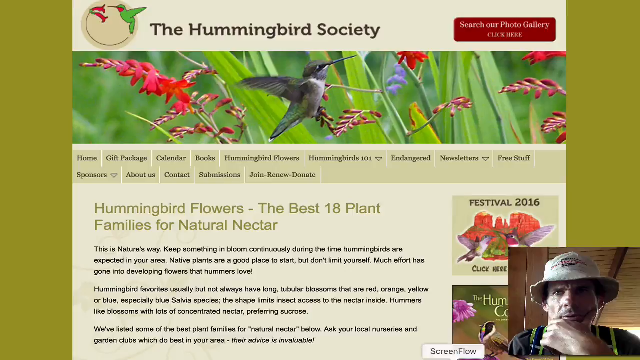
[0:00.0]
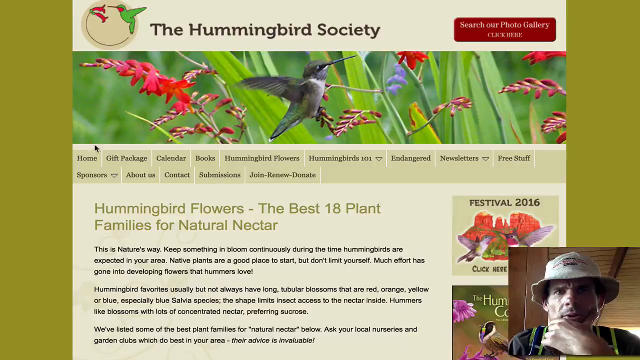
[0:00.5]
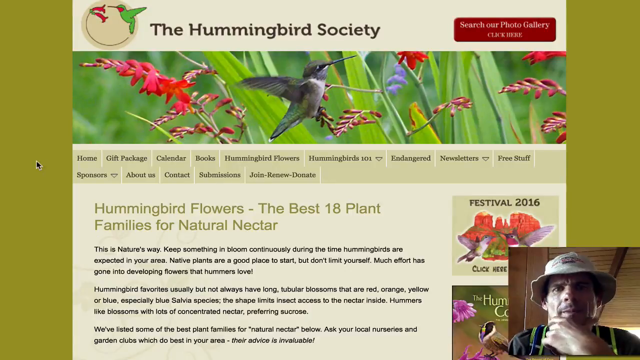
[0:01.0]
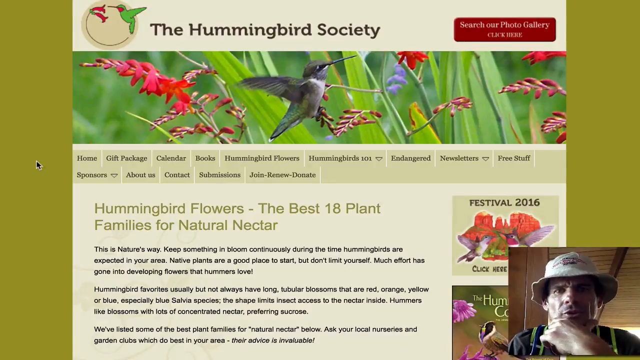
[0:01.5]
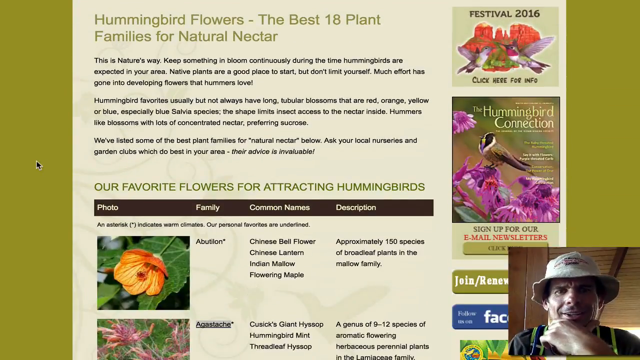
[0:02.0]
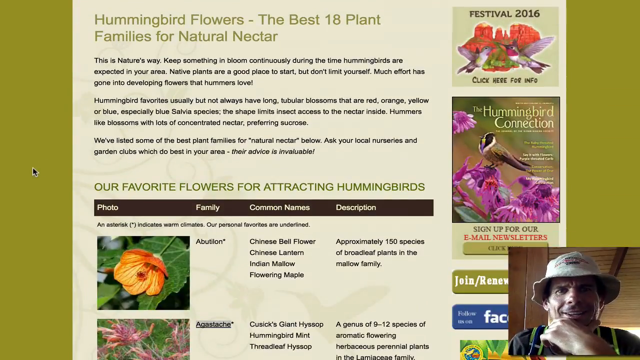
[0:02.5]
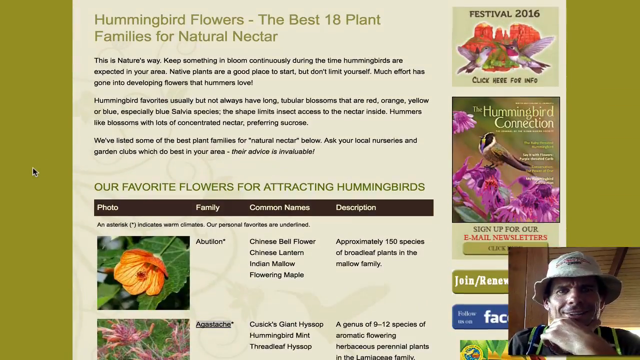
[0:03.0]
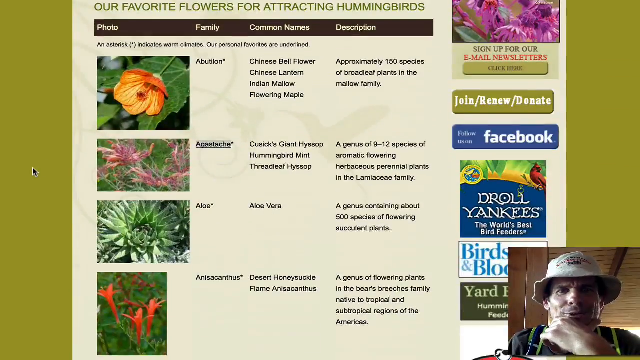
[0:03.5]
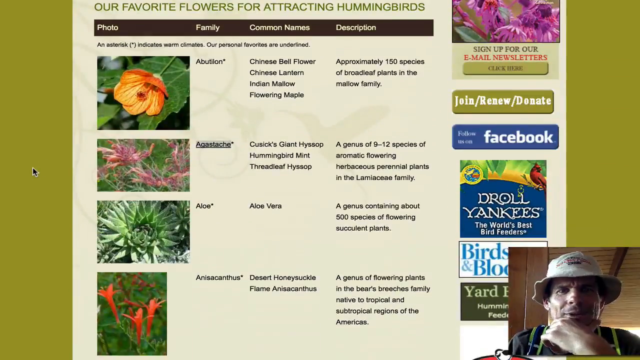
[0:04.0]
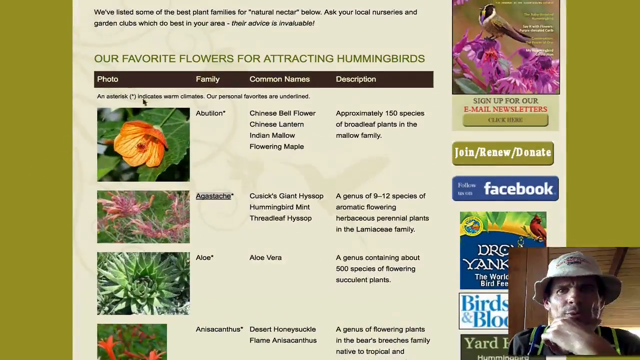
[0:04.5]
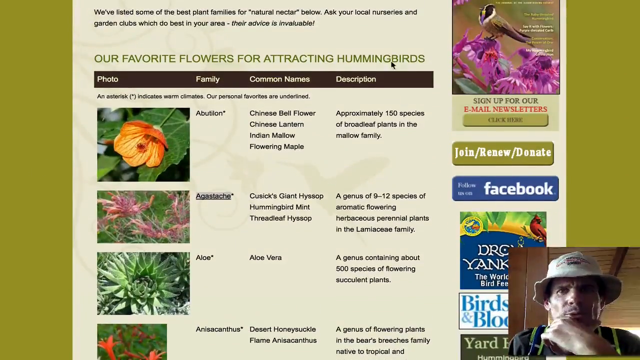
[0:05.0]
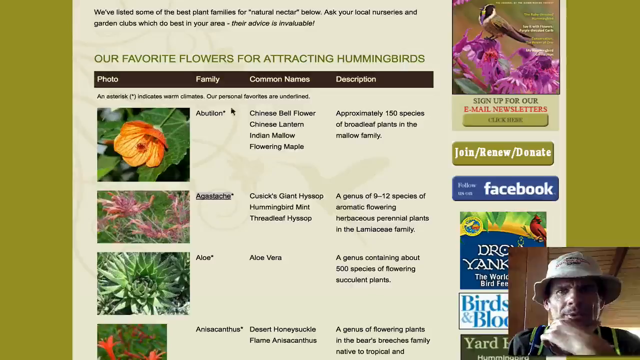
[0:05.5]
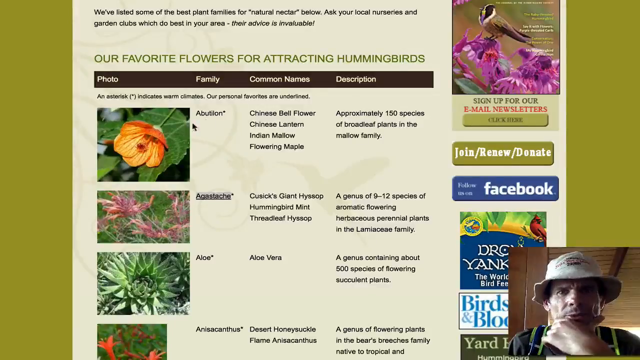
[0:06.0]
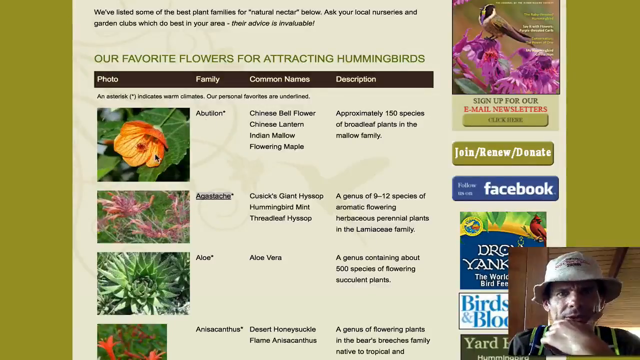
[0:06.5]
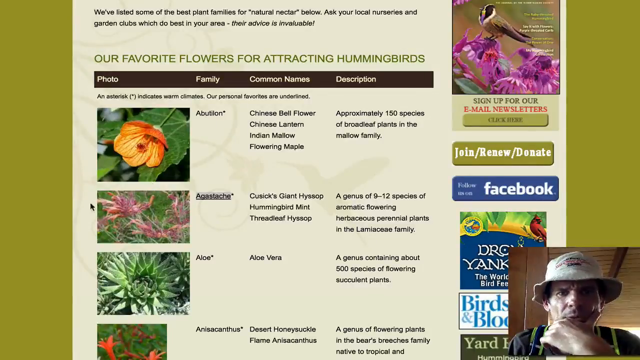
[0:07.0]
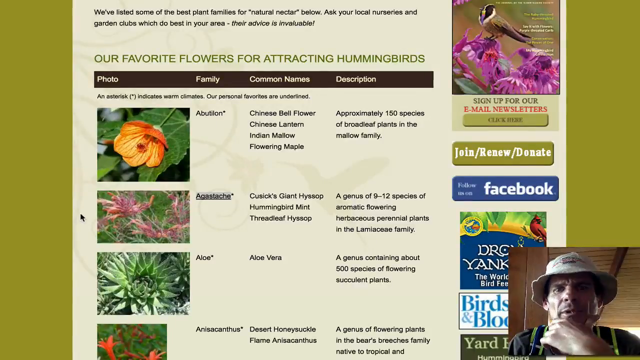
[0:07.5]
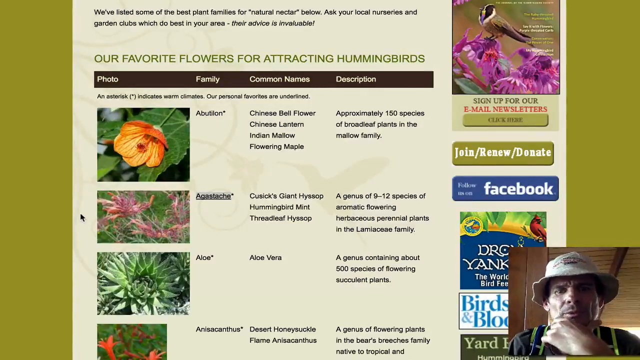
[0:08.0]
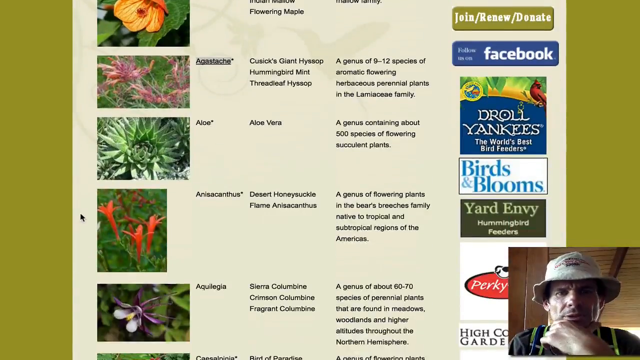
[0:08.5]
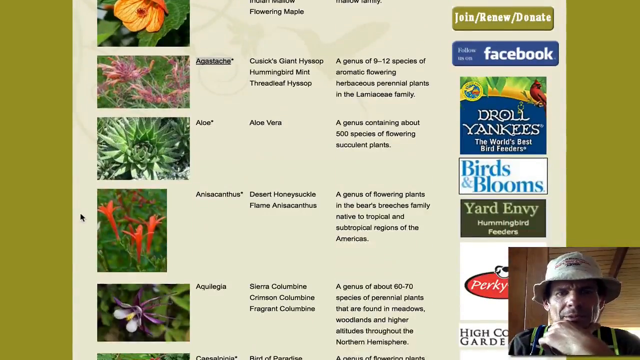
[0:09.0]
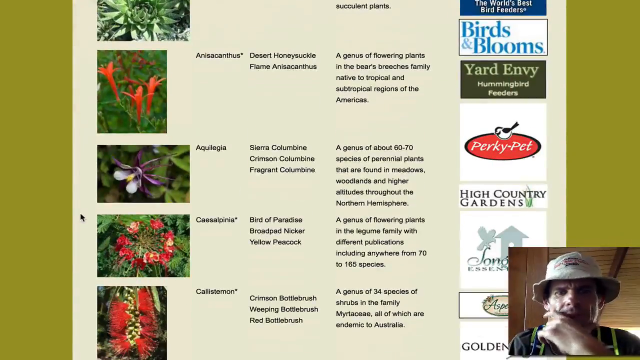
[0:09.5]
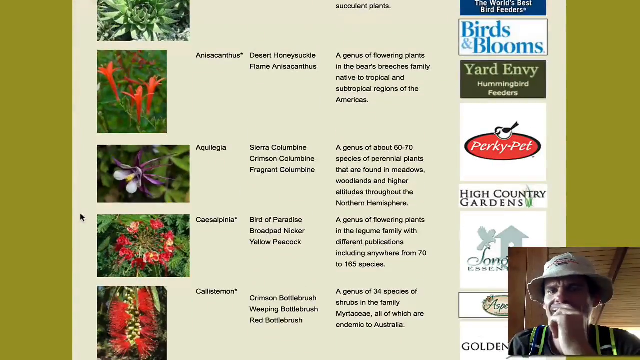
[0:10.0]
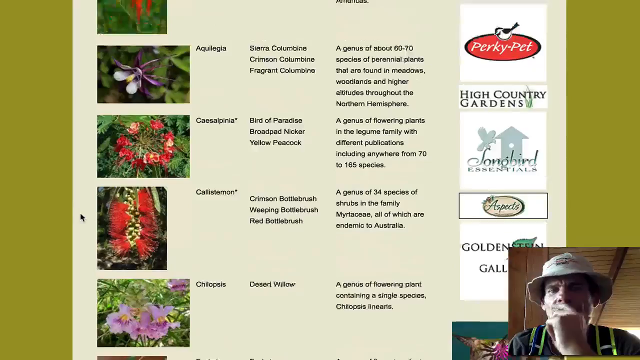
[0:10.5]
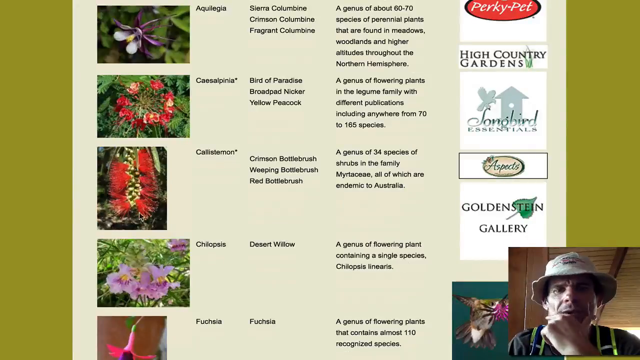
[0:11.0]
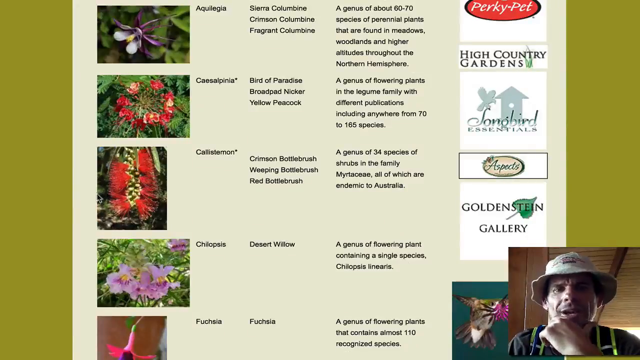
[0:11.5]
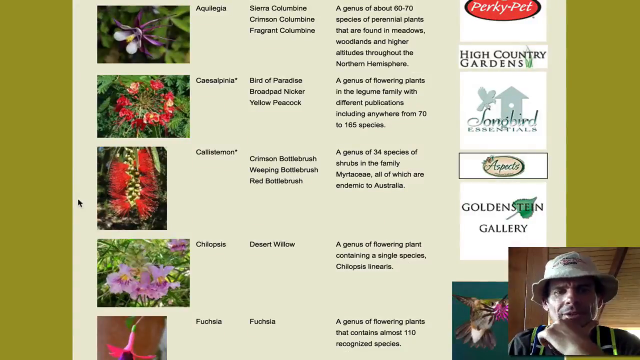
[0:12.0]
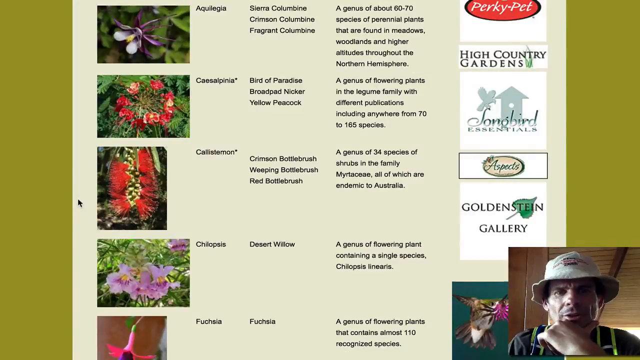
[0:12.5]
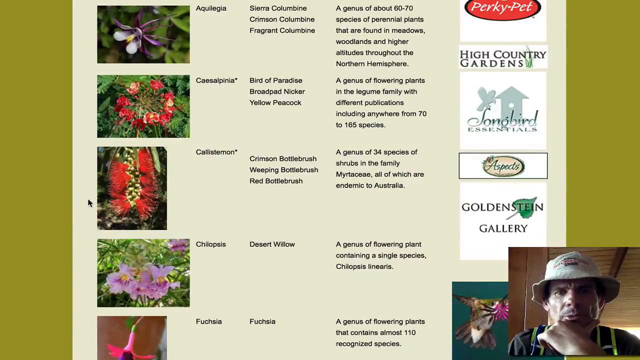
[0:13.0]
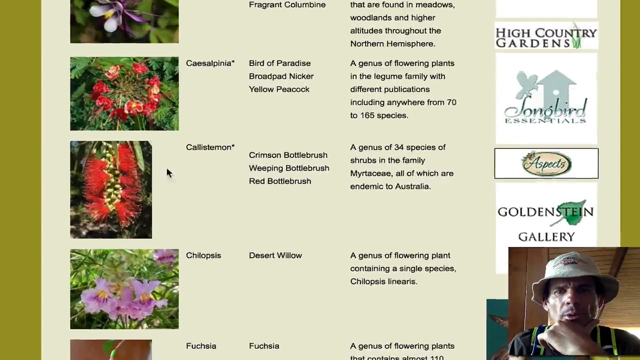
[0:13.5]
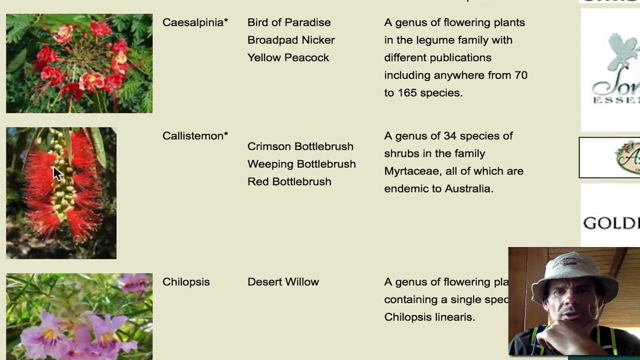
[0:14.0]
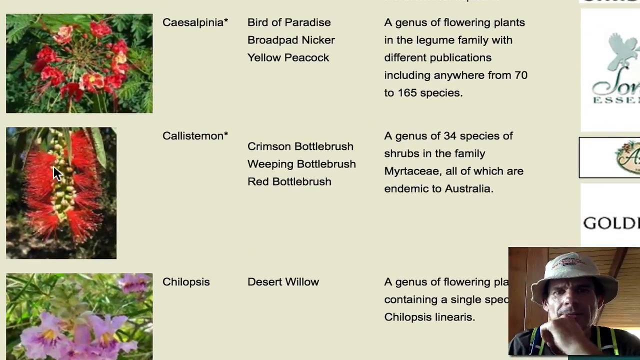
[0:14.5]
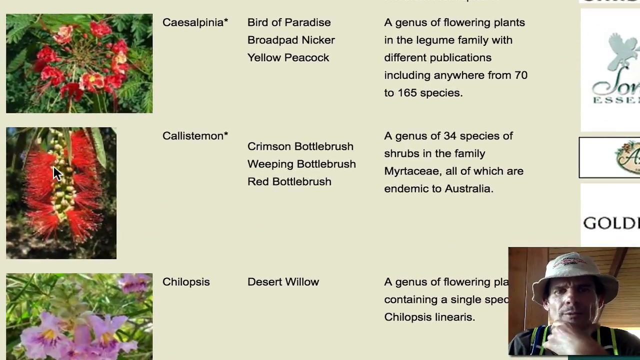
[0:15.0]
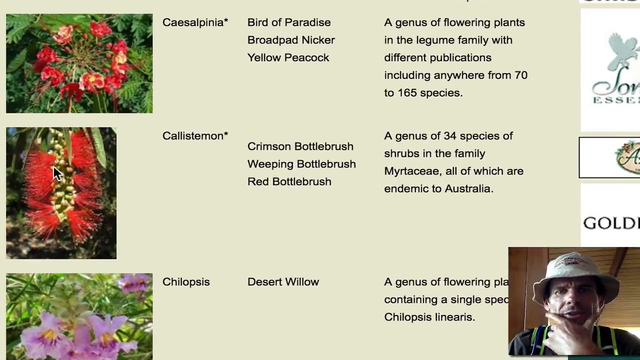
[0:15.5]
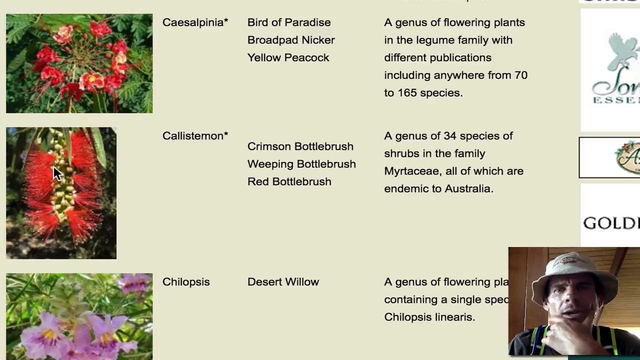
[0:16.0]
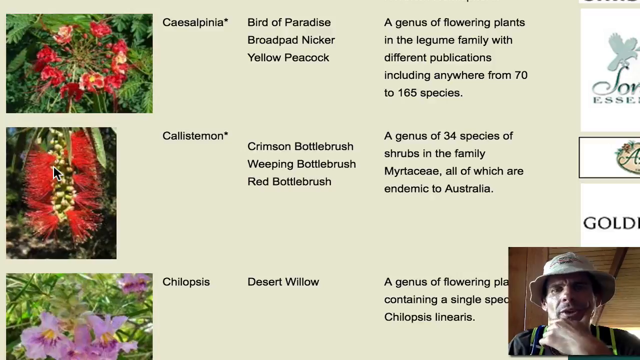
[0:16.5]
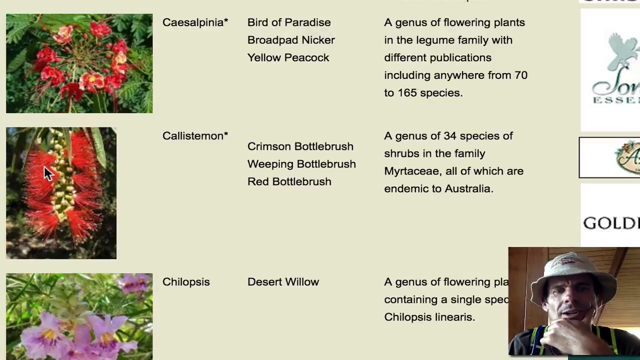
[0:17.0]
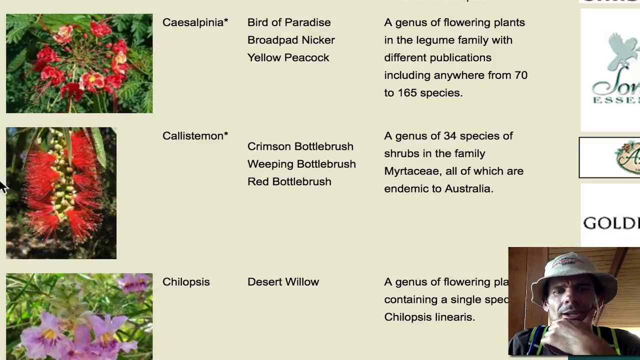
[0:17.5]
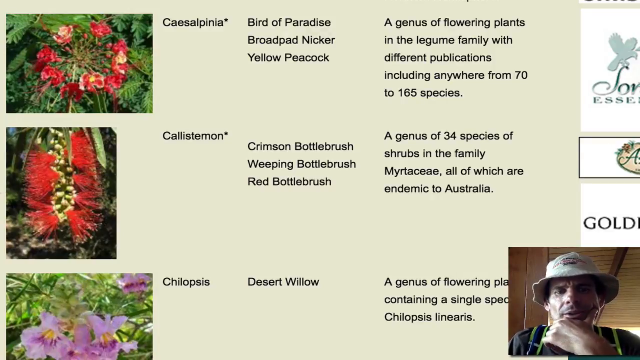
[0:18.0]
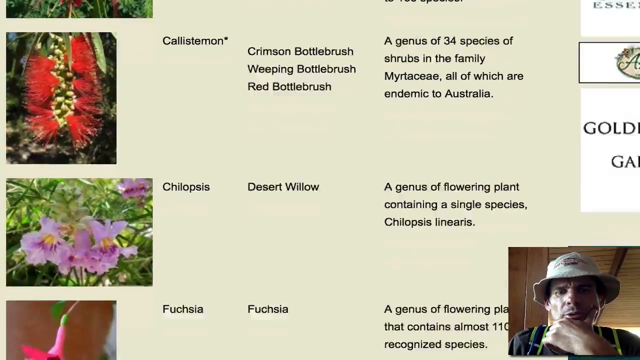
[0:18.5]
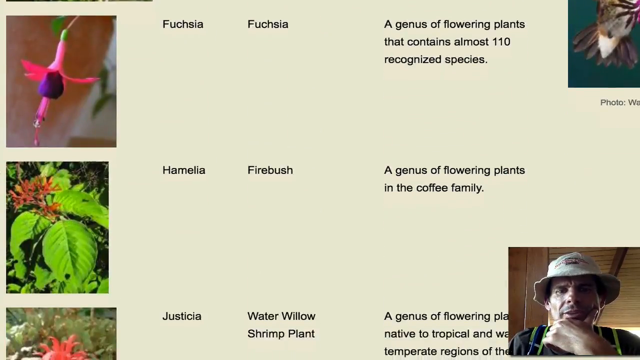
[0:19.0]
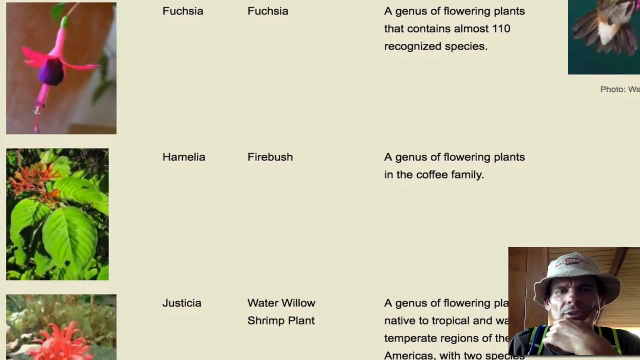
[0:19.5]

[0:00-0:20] The video opens on yellow, with a yellow back and a yellow inside, starting with the Hummingbird Society. A man in a bucket hat appears at the lower right with his hands on his jaw. A hummingbird is shown with a different flower, and the logo also shows a hummingbird with a red flower. It appears to be a hummingbird website, with text reading "the best 18 plant families for natural nectar." The page of different flowers scrolls, and the man seems to be using his mouse to explain the different types of flowers. He zooms in on a flower called the Callistemon, listed as "crimson bottle brush, whipping bottle brush, red bottle brush," "a genus of 34 species of shrubs in the family Mytaceae, all of which are endemic to Australia." He then continues scrolling down.